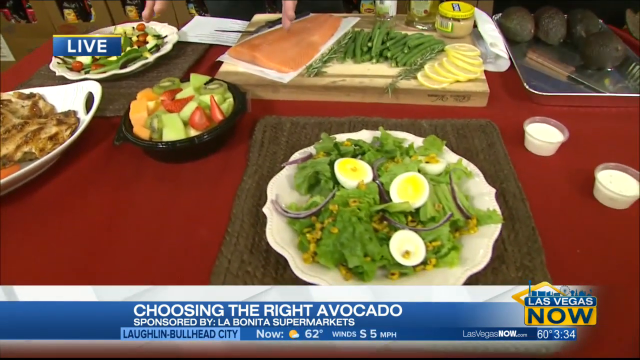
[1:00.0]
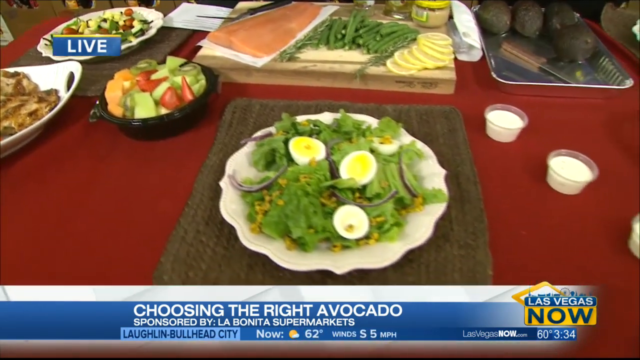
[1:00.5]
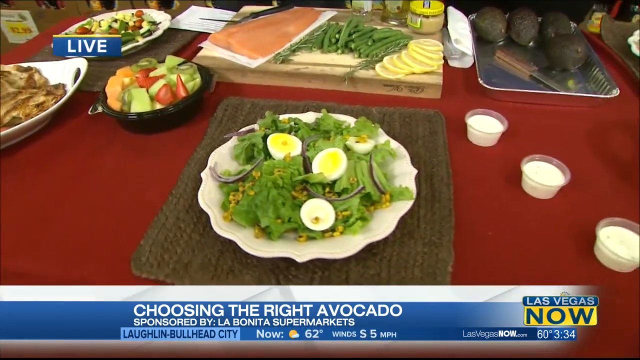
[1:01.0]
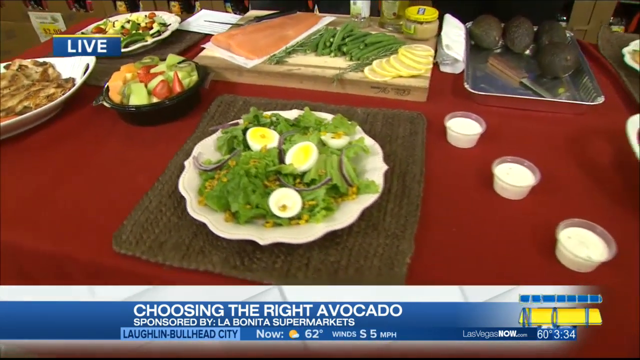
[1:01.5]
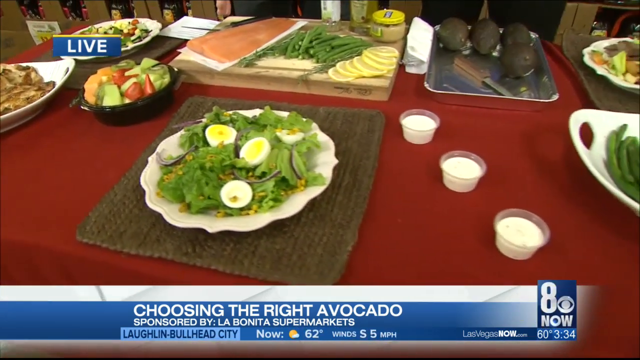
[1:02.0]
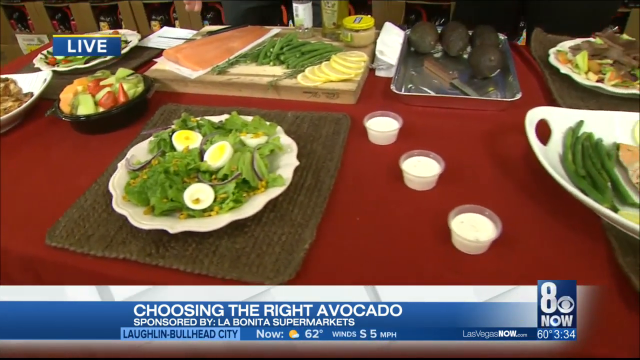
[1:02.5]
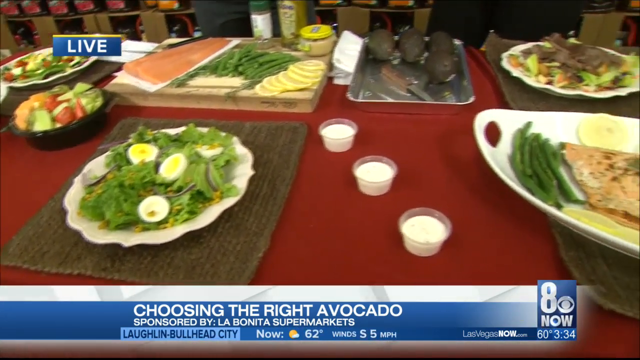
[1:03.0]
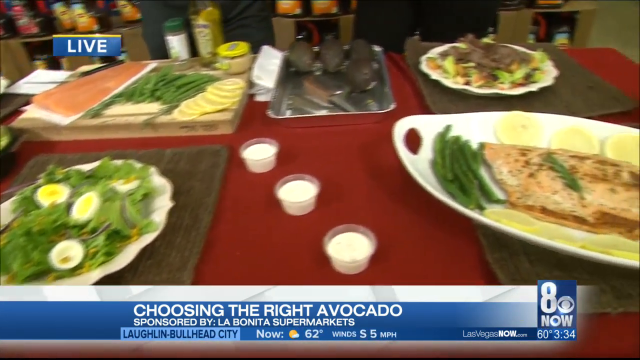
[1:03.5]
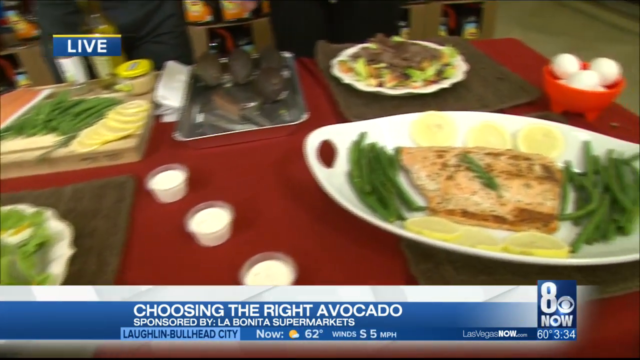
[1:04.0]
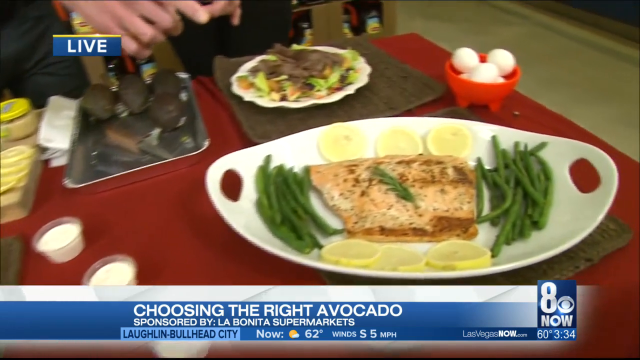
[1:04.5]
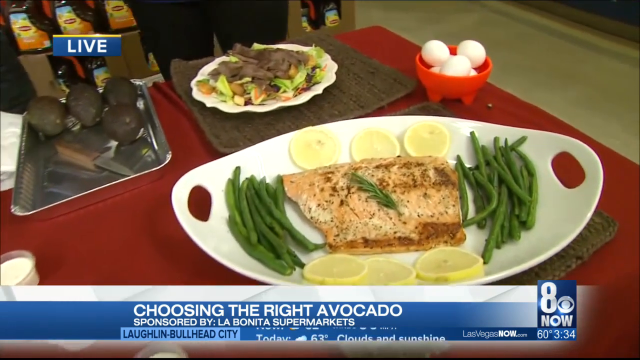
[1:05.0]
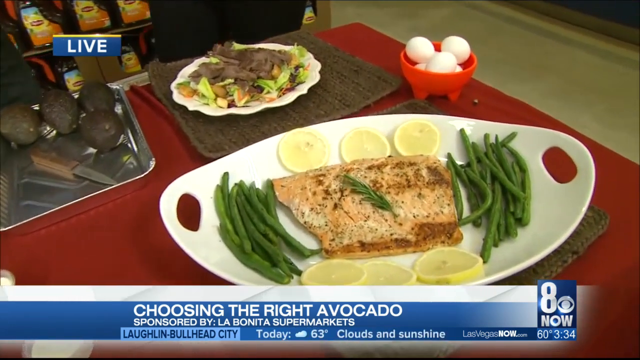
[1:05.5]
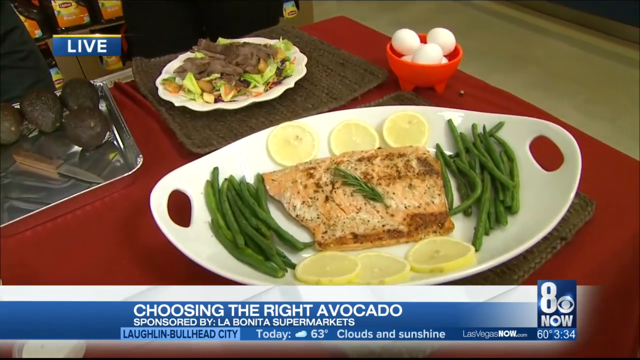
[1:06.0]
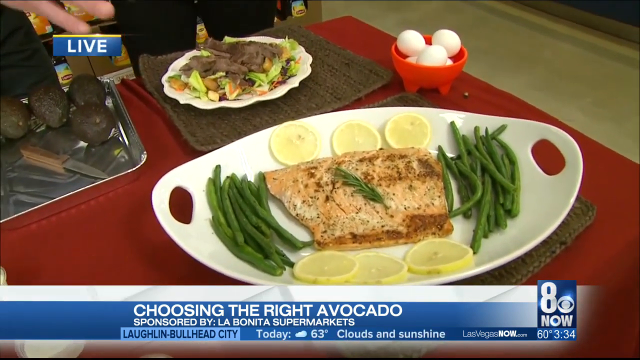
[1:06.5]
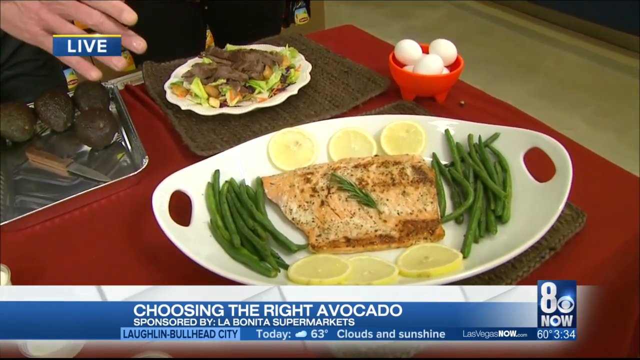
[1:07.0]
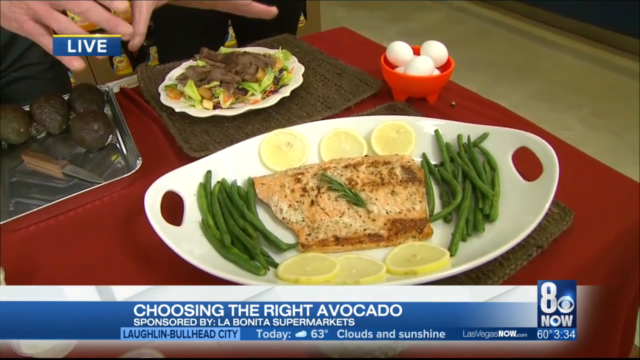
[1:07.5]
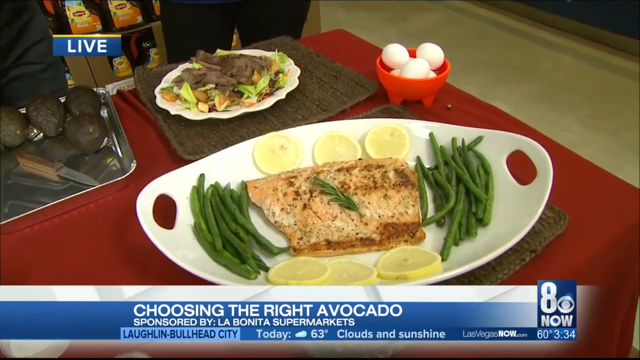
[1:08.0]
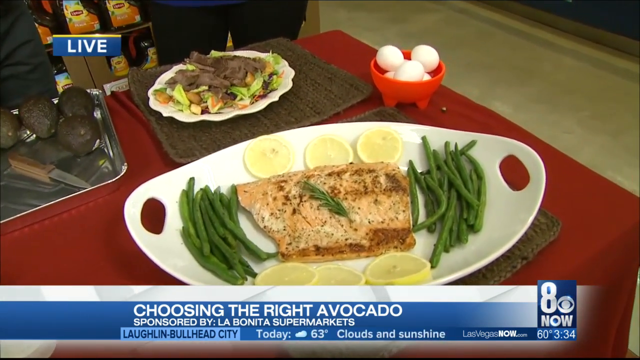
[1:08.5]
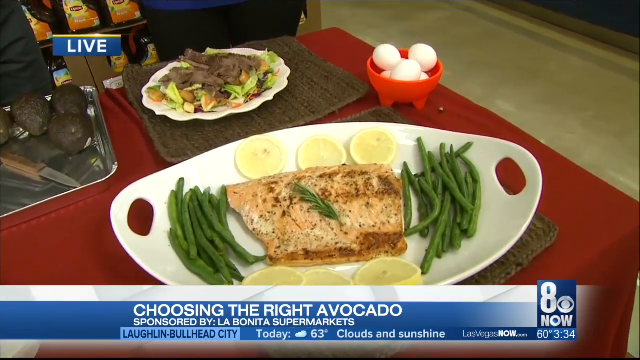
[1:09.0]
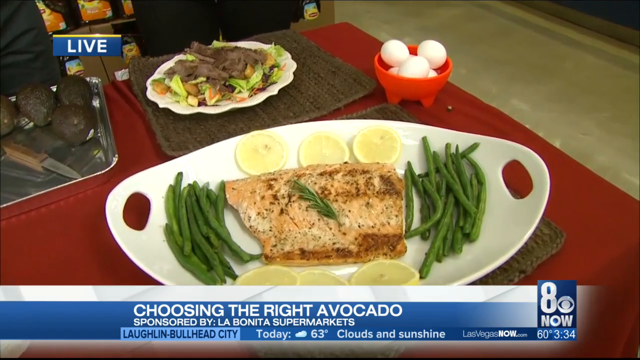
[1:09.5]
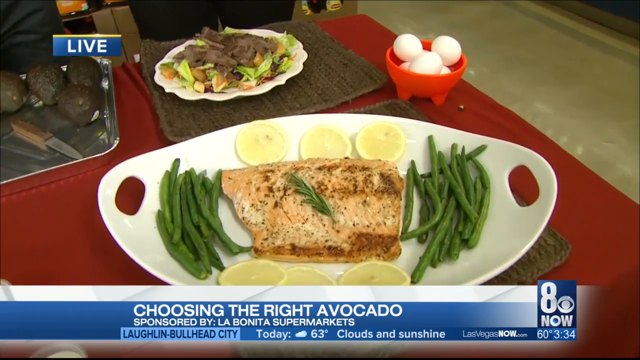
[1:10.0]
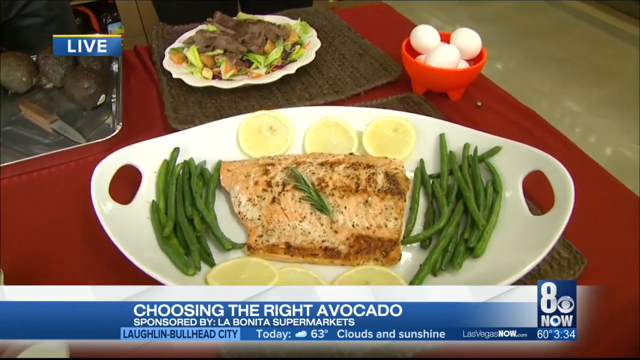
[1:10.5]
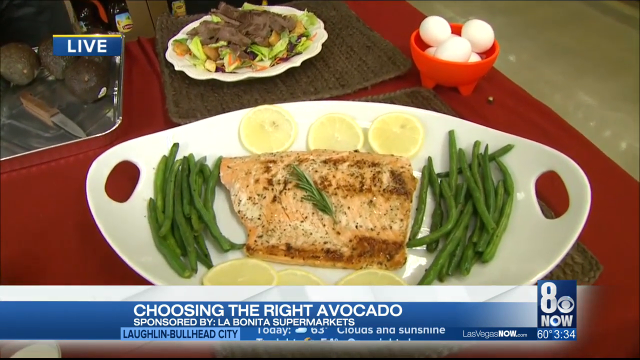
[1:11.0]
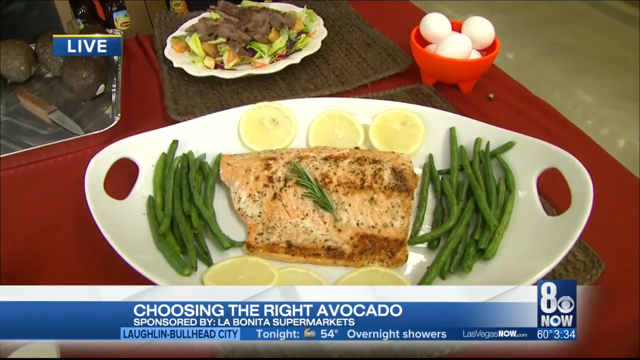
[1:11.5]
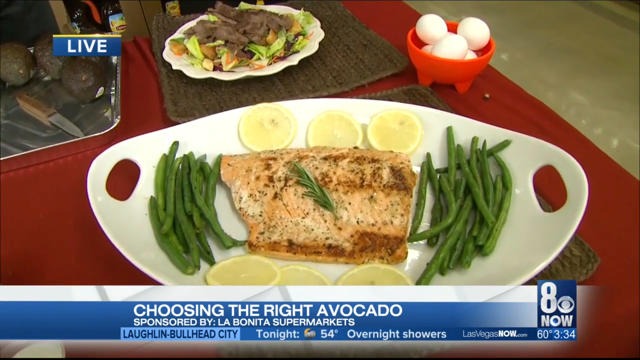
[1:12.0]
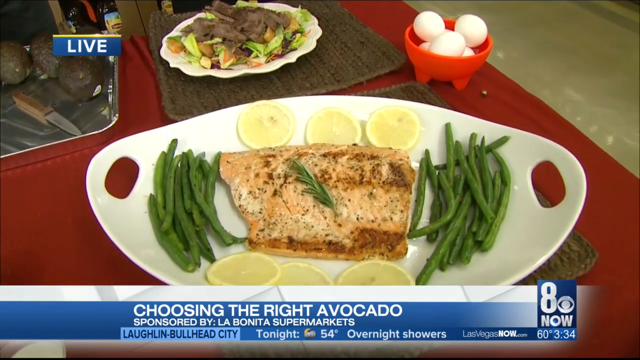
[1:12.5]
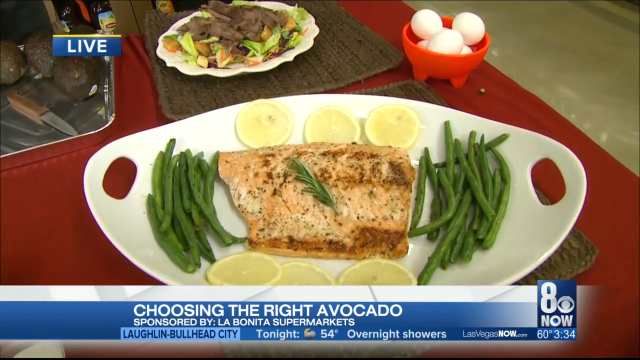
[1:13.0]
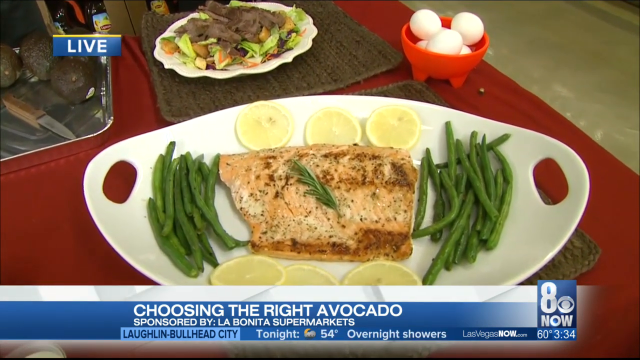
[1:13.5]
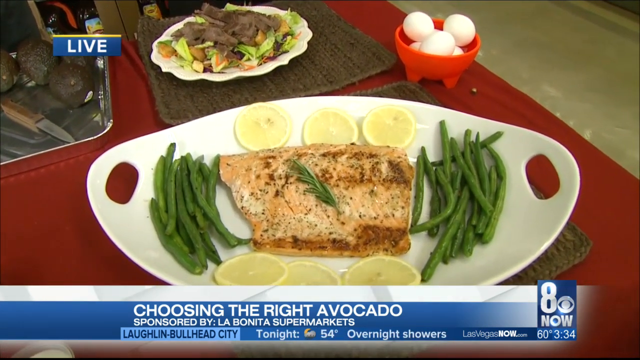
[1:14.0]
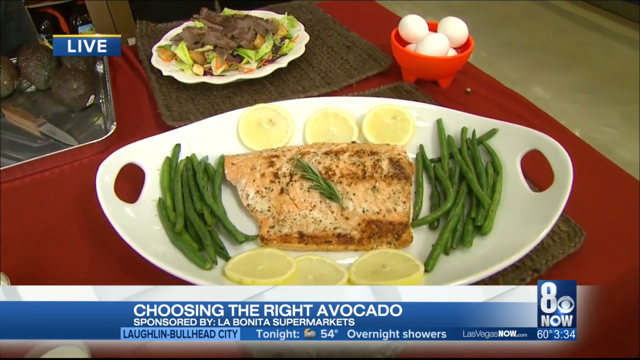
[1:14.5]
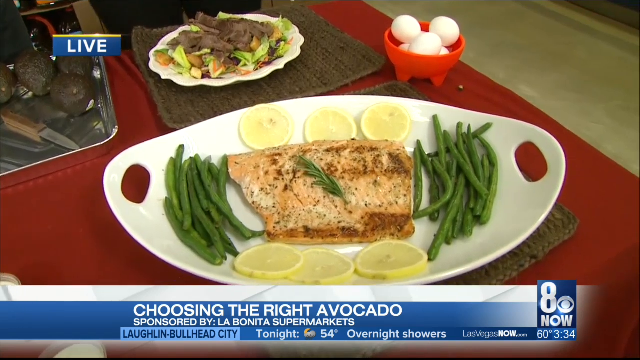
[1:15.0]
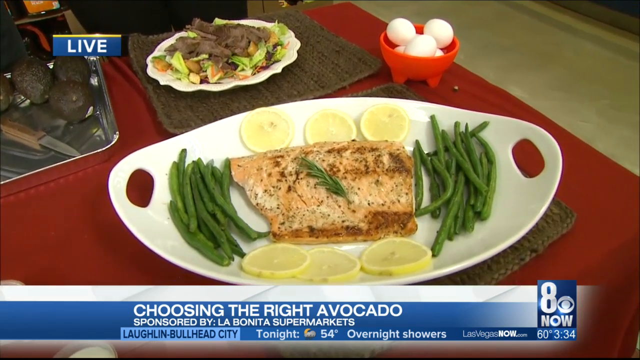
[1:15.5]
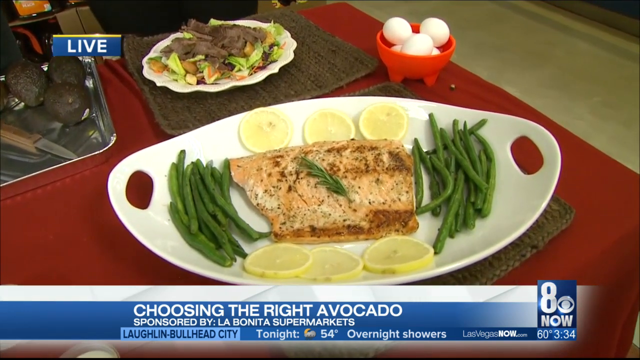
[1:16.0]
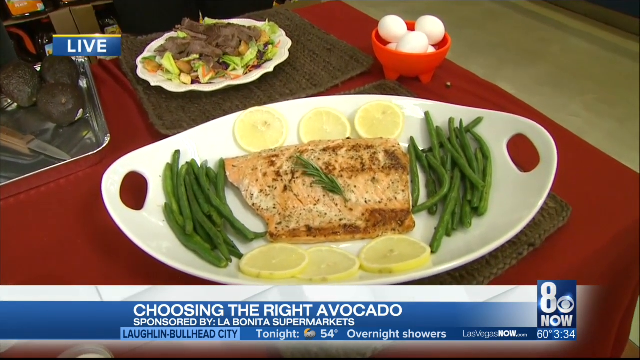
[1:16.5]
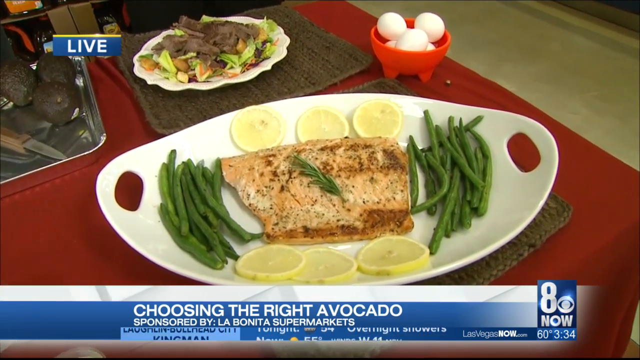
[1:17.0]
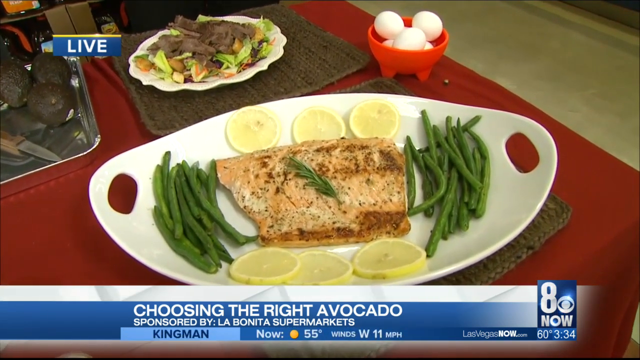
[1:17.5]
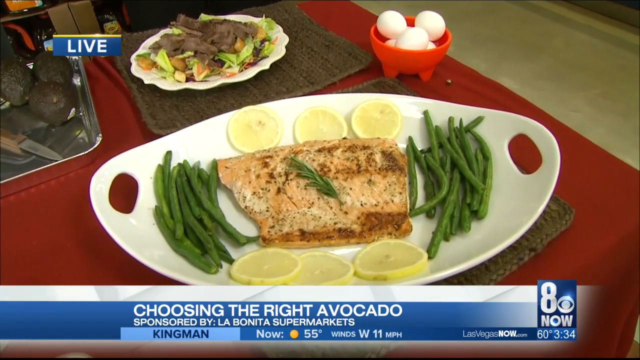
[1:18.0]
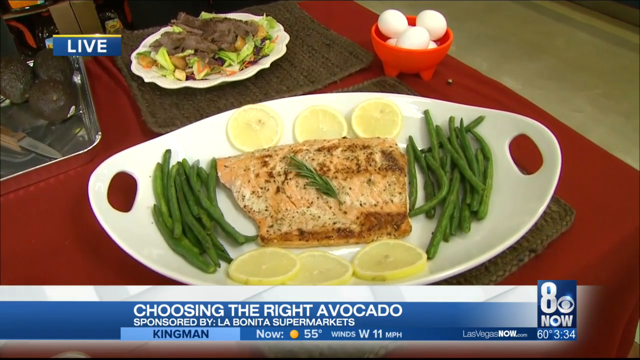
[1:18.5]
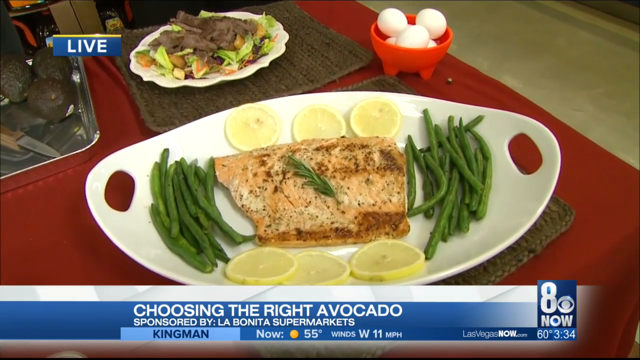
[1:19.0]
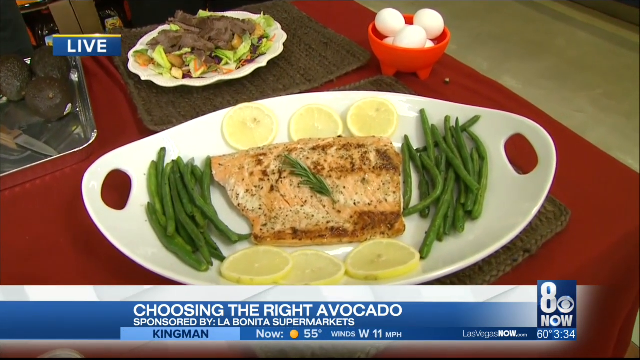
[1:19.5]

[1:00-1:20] A table holds a lot of food: a salad plate, a fruit plate with kiwis, melons and strawberries, another little salad plate with eggs, and a plate of grilled chicken, carrots and broccoli. On-screen text reads "choose the right avocados sponsored by LA Bonita Supermarkets," apparently from Las Vegas now, Channel 8 News. A piece of salmon with asparagus appears, along with a lot of avocados and eggs. Another plate holds something unidentified. There are also what appear to be little cups of ranch dressing.